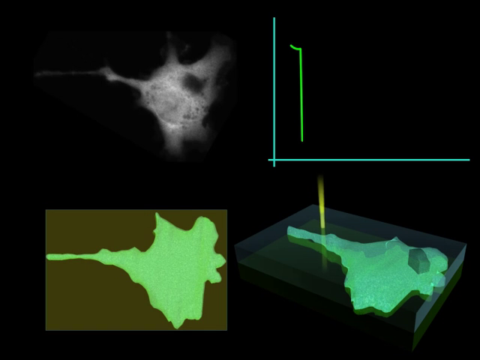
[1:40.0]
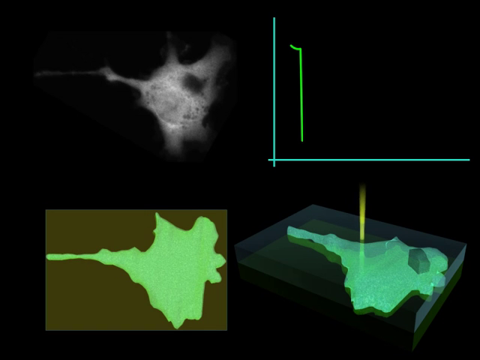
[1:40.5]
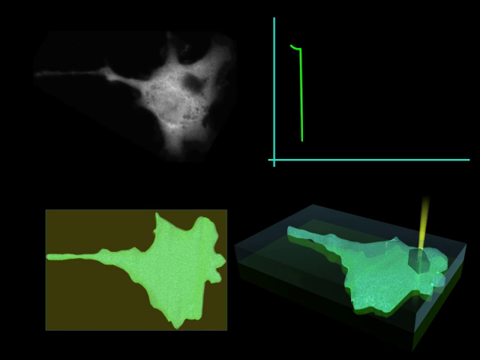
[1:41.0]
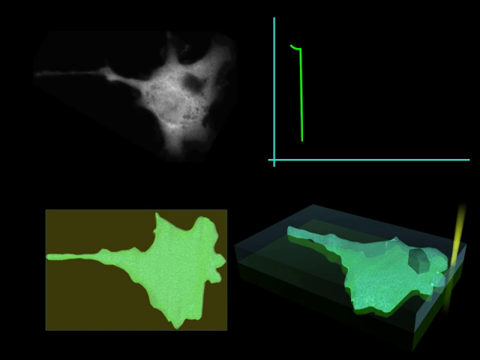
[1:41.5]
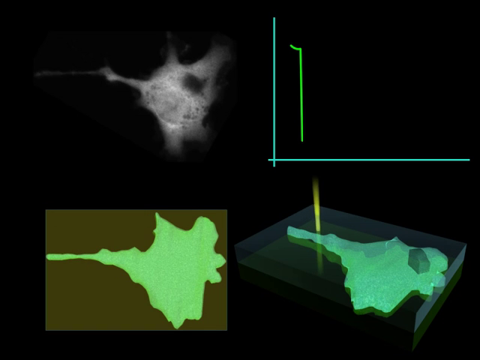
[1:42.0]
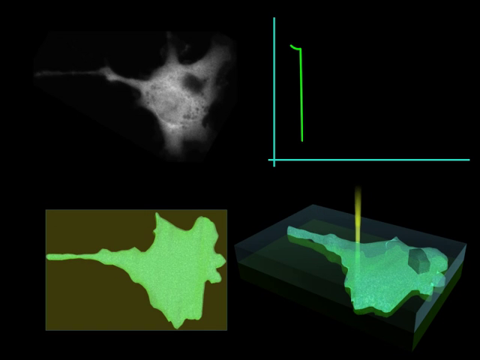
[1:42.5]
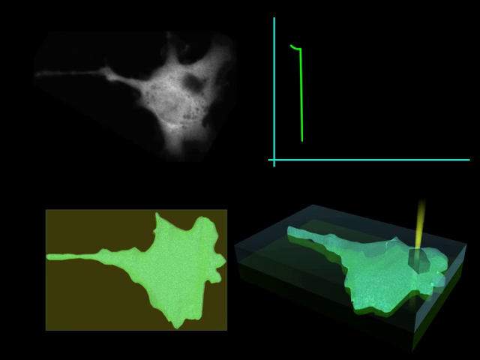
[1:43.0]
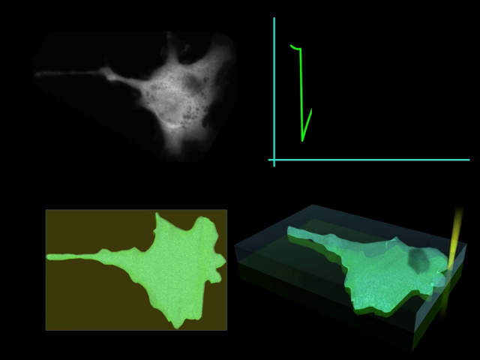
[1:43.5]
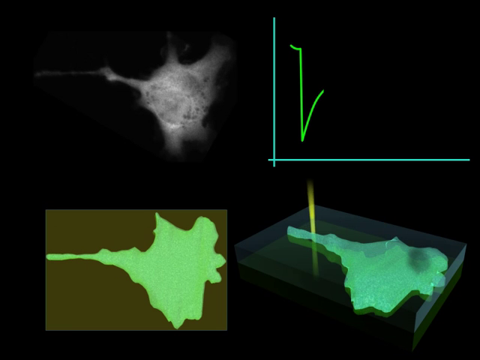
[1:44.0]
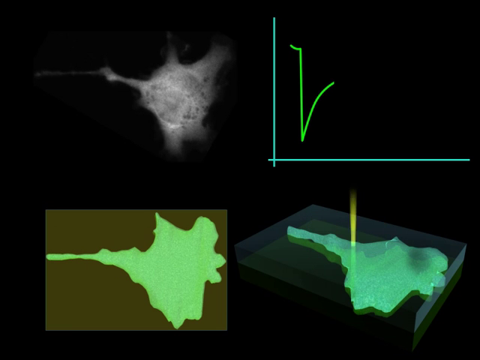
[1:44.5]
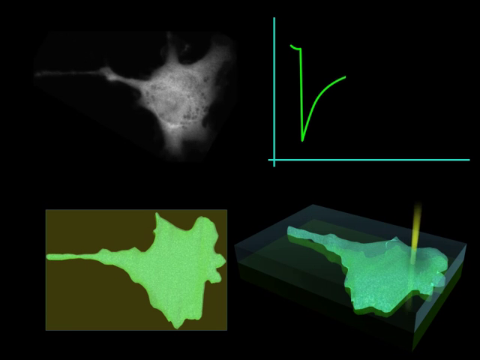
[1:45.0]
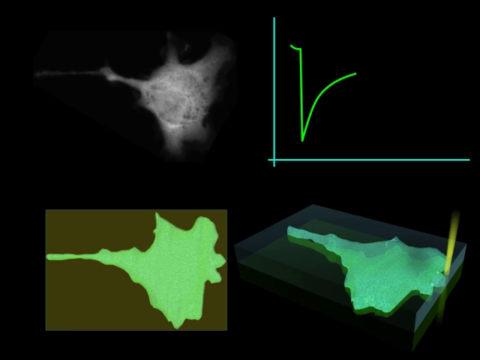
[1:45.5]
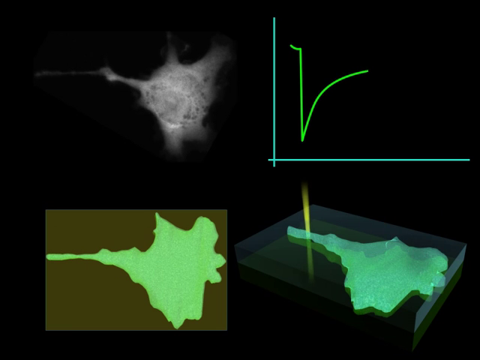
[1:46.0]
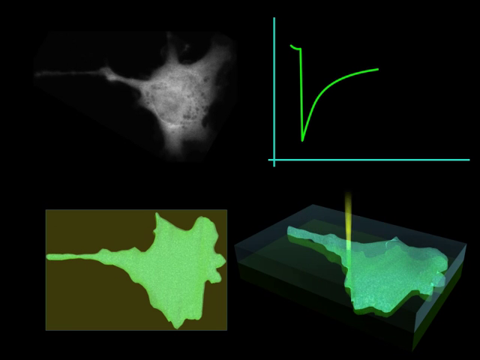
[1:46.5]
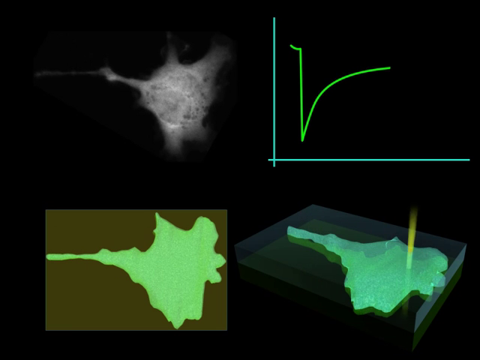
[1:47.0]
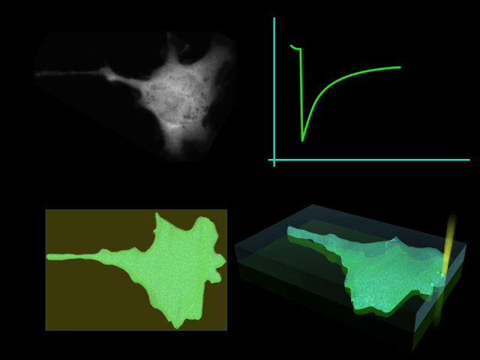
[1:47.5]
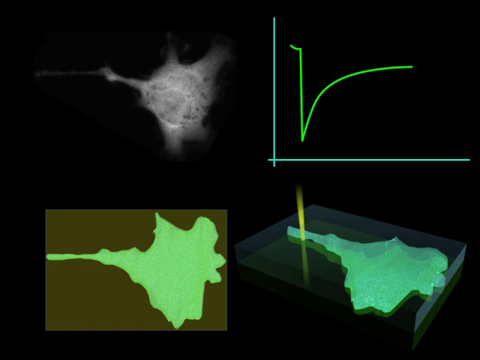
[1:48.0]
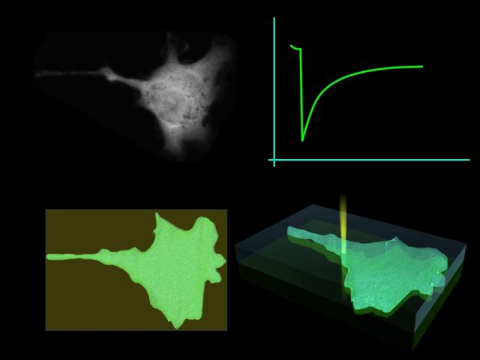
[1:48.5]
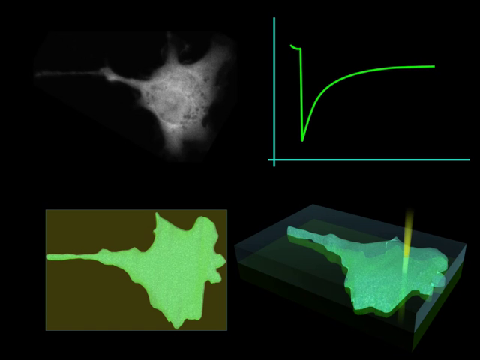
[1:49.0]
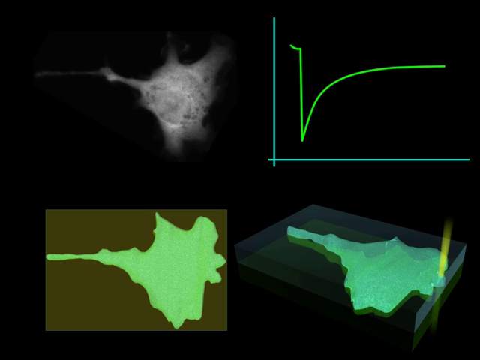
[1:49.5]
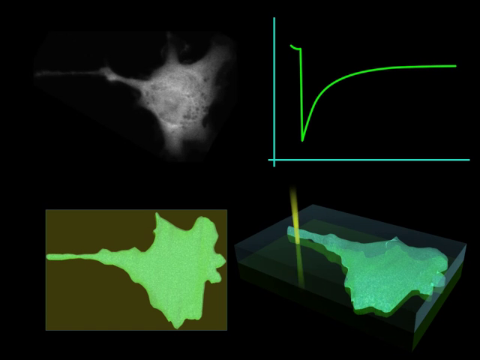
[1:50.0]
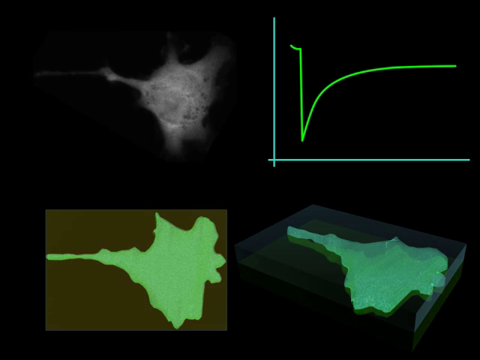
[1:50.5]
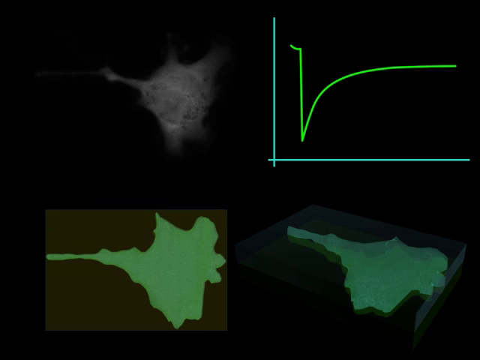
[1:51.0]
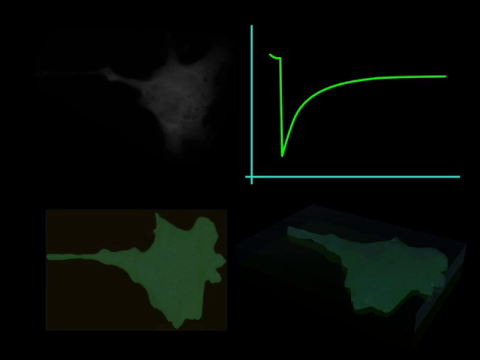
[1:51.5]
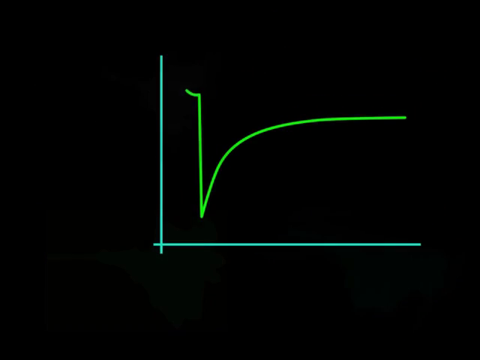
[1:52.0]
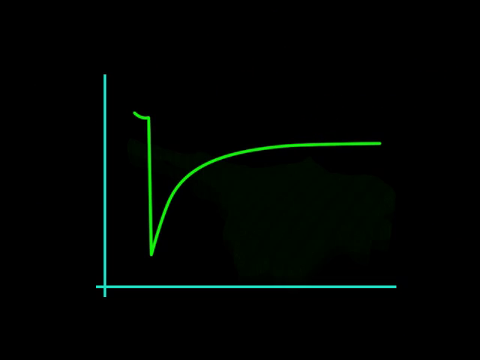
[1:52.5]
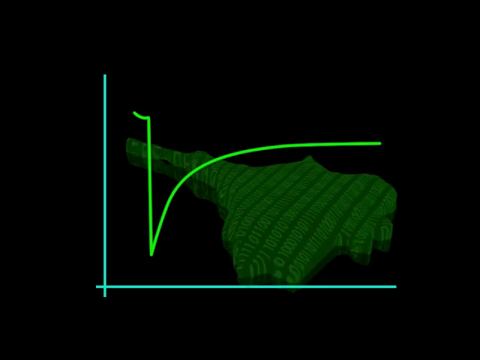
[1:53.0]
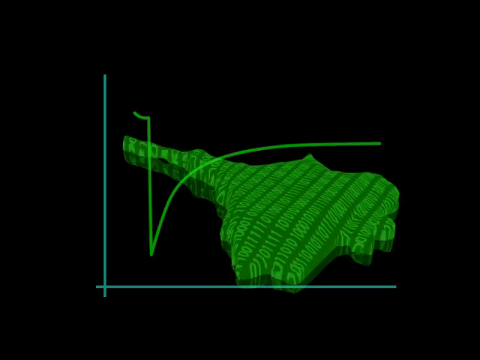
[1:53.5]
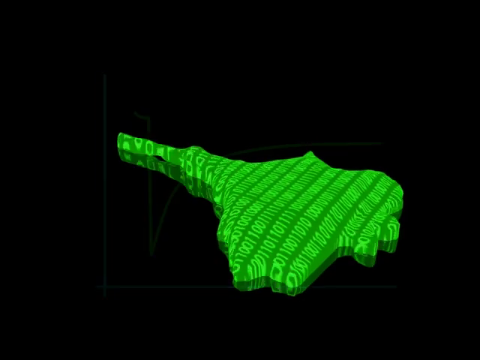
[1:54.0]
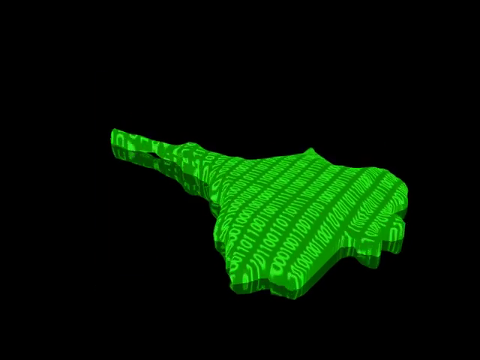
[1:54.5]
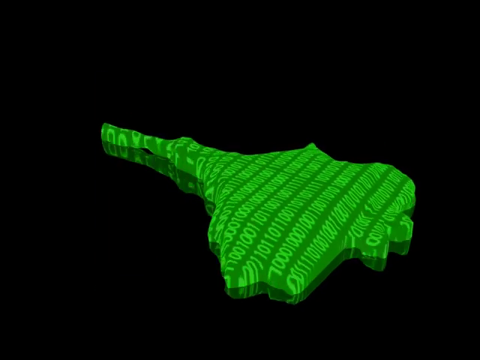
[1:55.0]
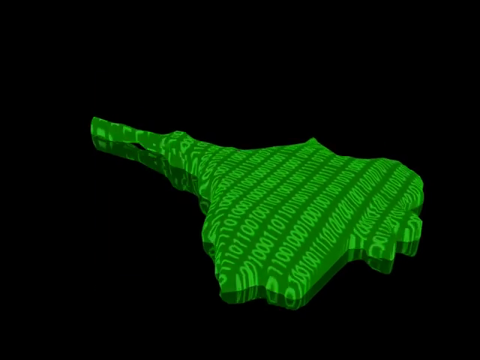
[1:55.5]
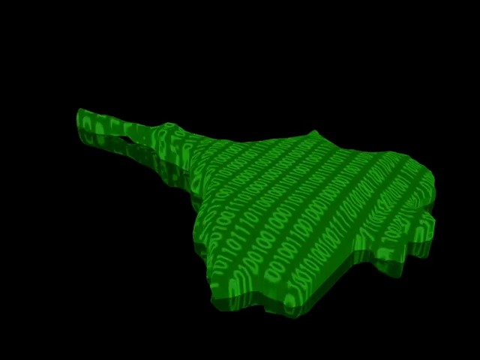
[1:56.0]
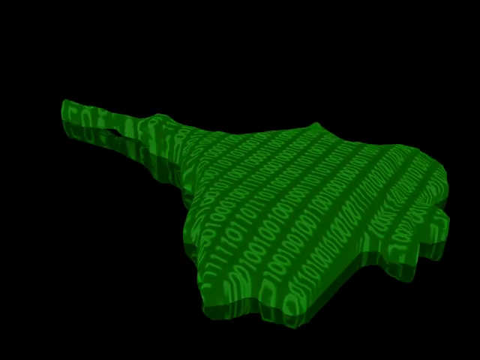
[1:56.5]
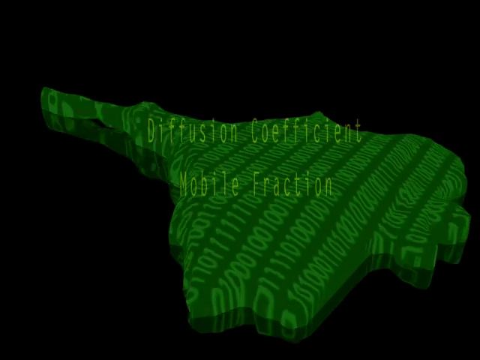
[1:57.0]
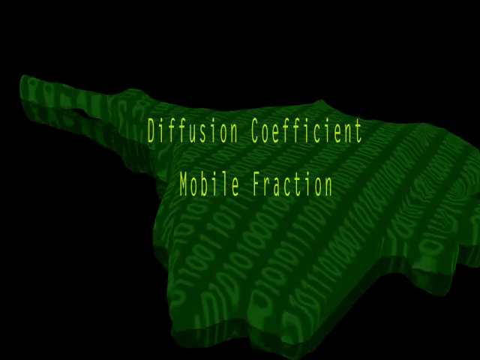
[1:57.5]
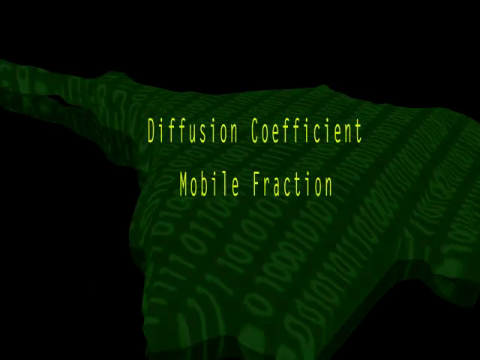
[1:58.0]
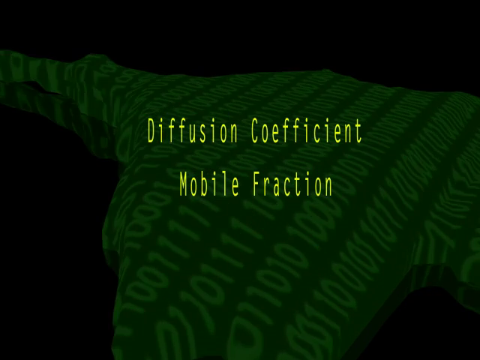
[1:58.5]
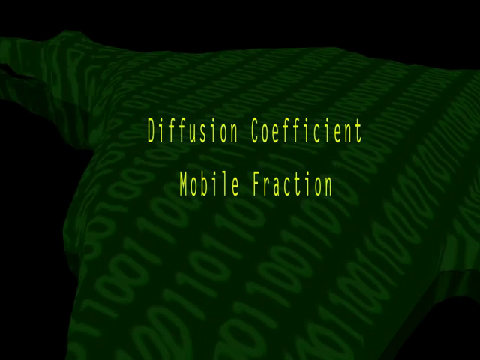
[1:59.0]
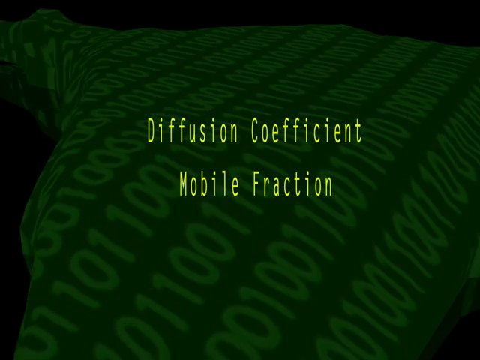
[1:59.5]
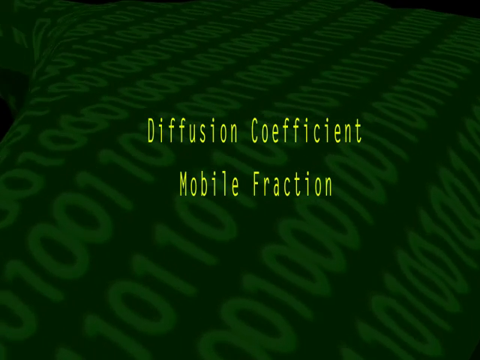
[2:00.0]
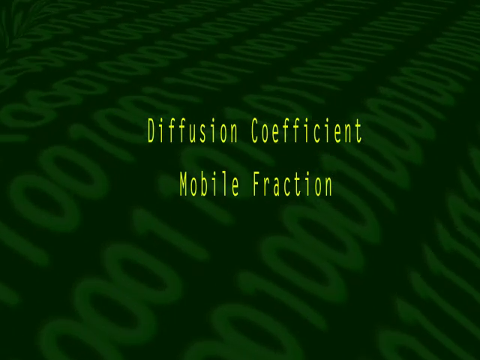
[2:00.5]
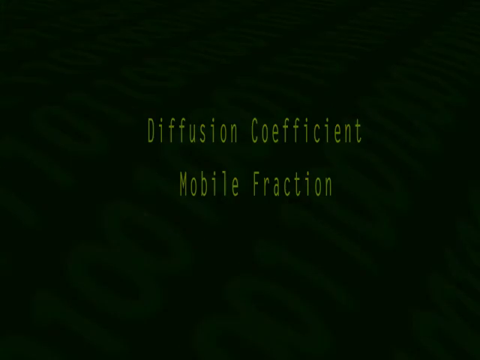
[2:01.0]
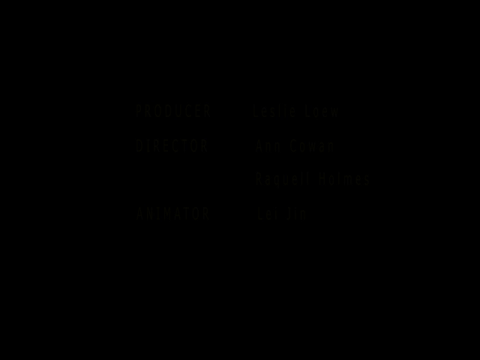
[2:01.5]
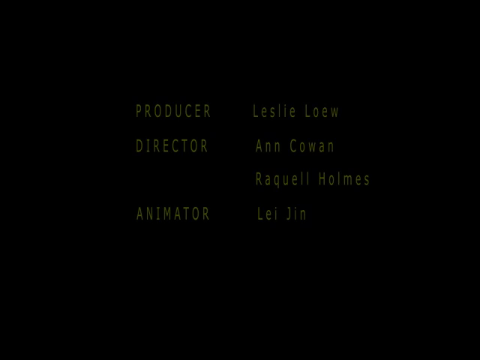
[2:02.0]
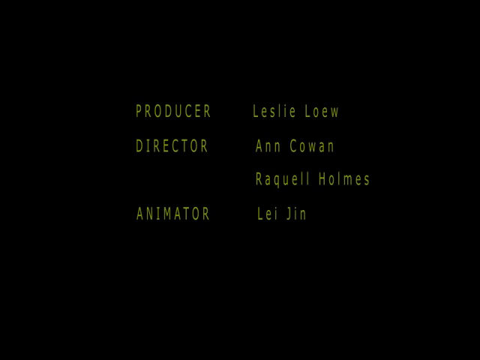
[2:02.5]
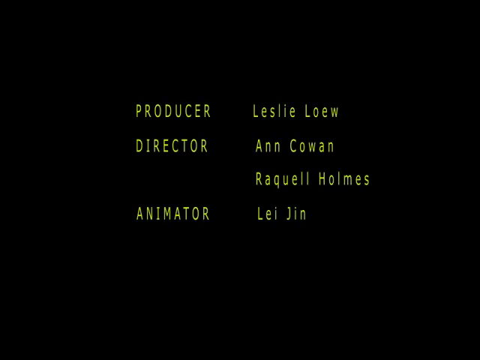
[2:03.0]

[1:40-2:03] A black background shows the scanning of the feature, with something like a graph in the upper right illustrating the curvature of the feature. Next comes green movement with numbers on it, and text appears with the words "diffusion coefficient mobile fraction." The video seems to end at a very microscopic level, and the final part shows credits listing people who helped with the research and the video.